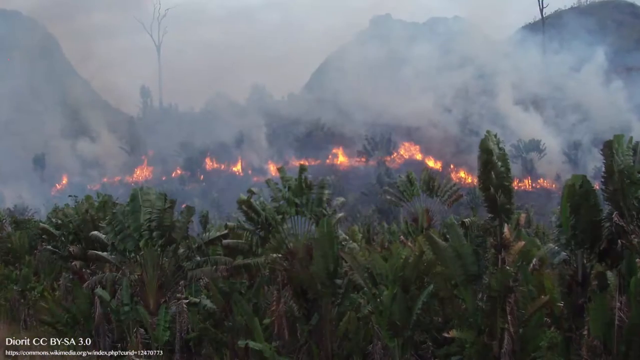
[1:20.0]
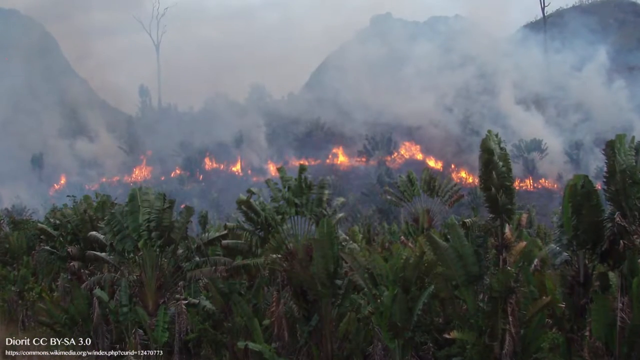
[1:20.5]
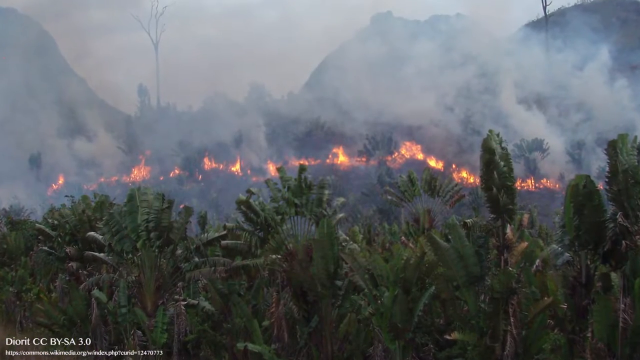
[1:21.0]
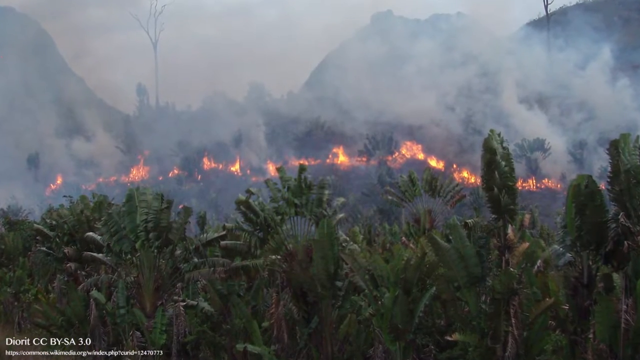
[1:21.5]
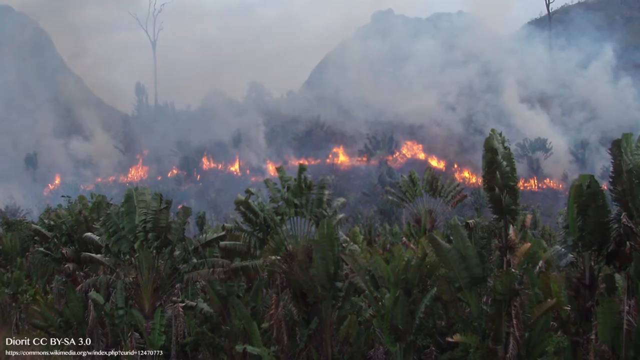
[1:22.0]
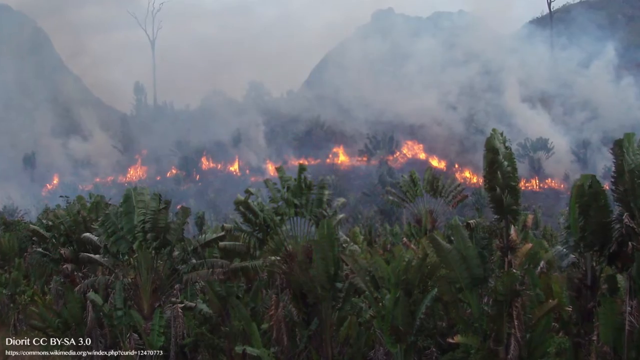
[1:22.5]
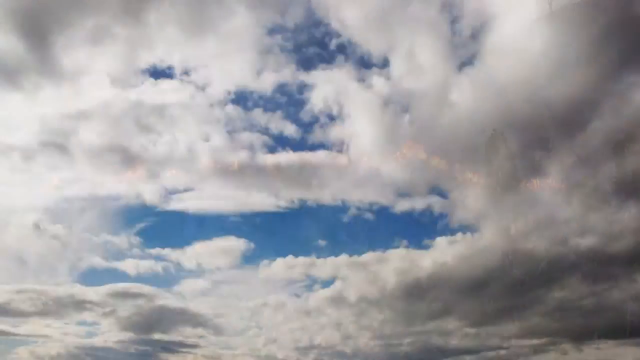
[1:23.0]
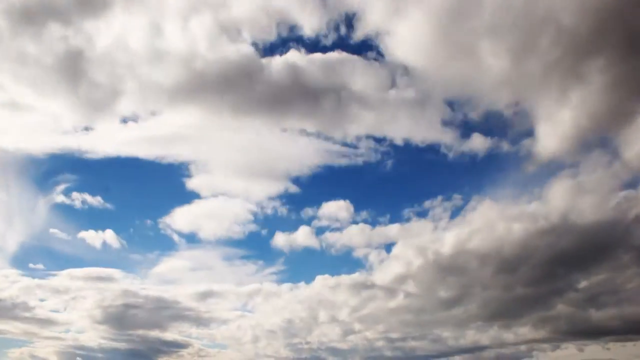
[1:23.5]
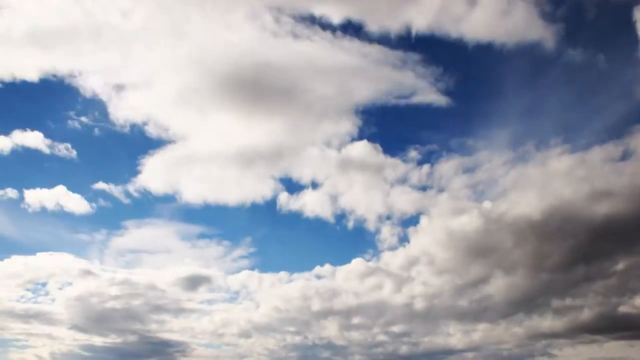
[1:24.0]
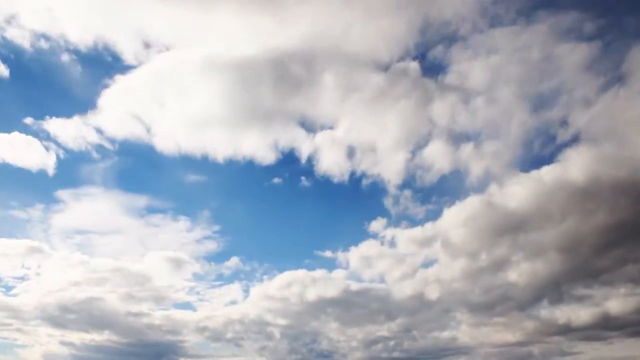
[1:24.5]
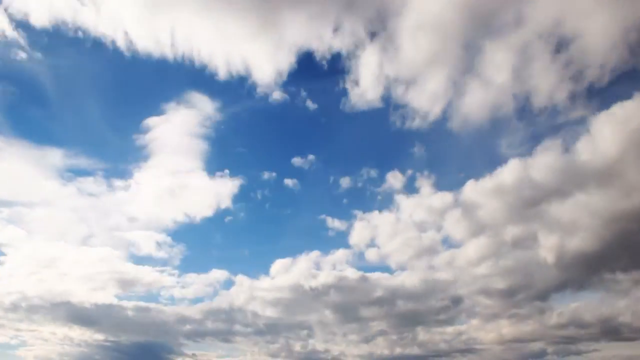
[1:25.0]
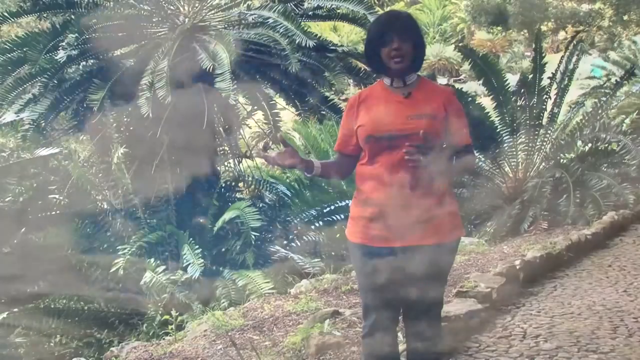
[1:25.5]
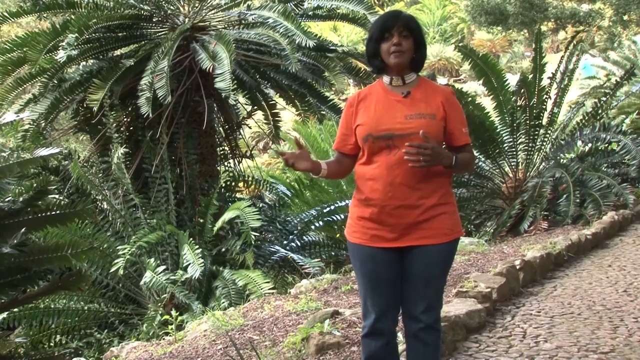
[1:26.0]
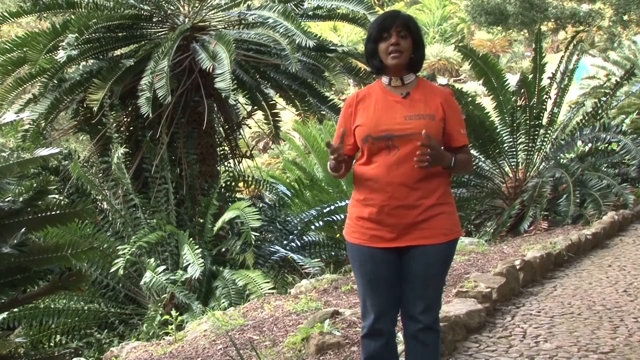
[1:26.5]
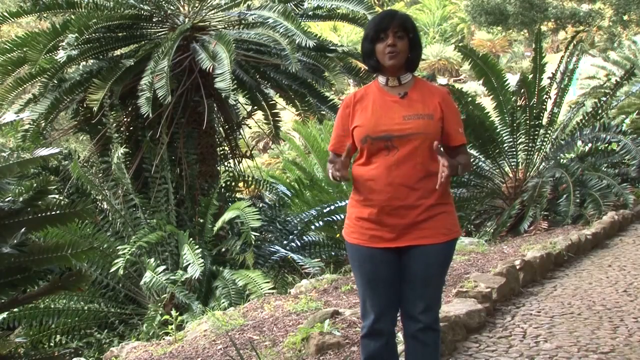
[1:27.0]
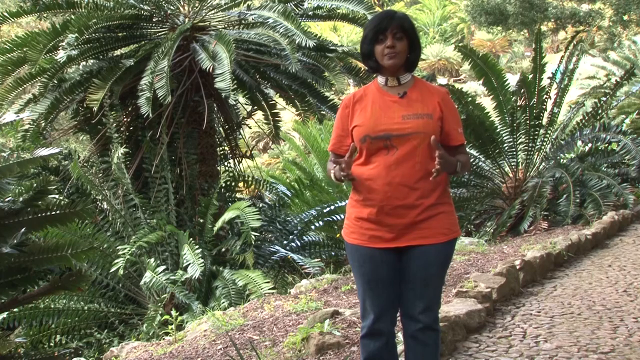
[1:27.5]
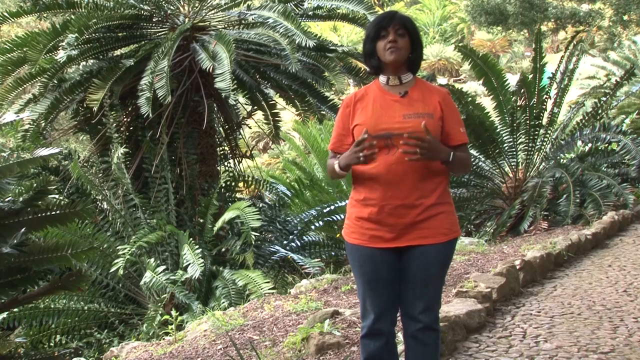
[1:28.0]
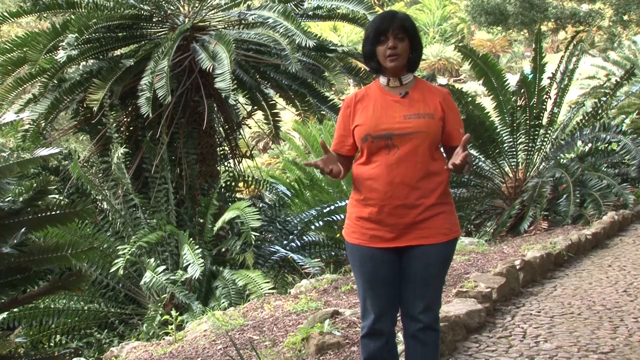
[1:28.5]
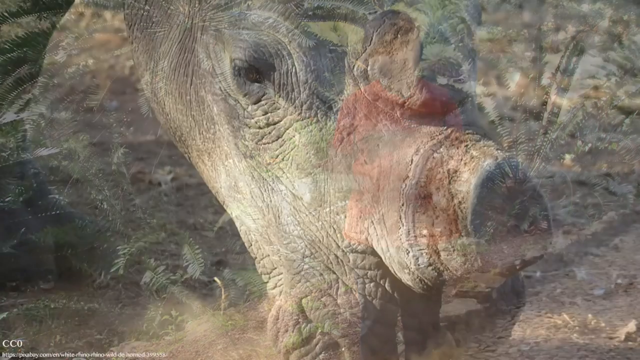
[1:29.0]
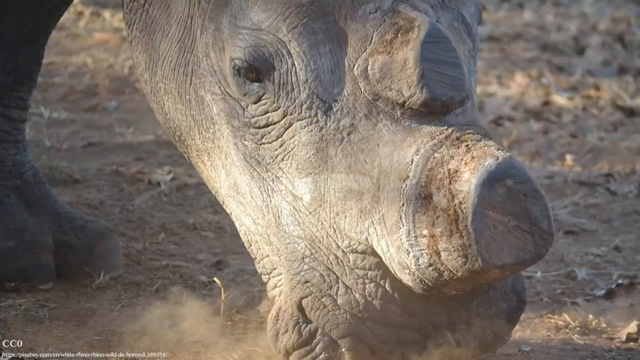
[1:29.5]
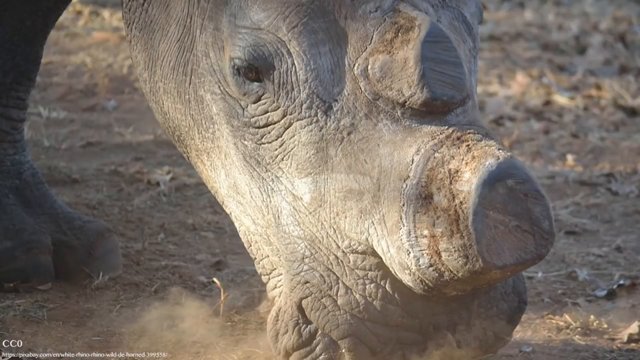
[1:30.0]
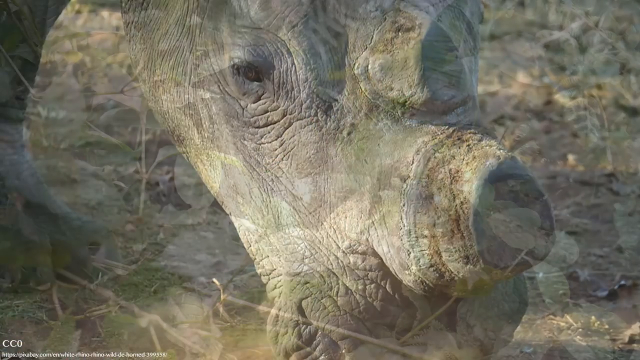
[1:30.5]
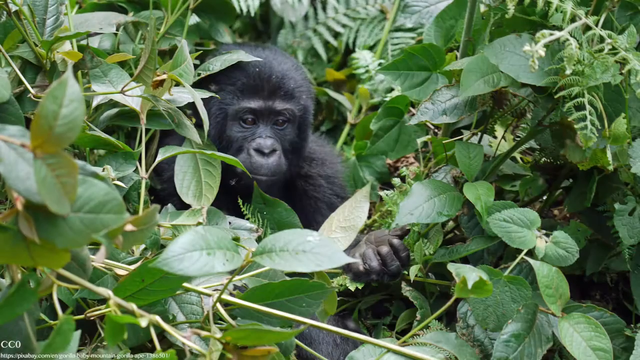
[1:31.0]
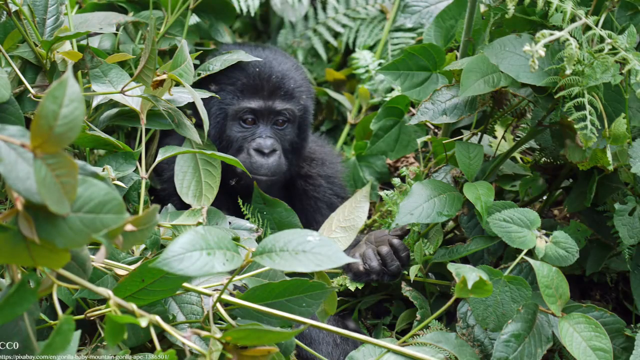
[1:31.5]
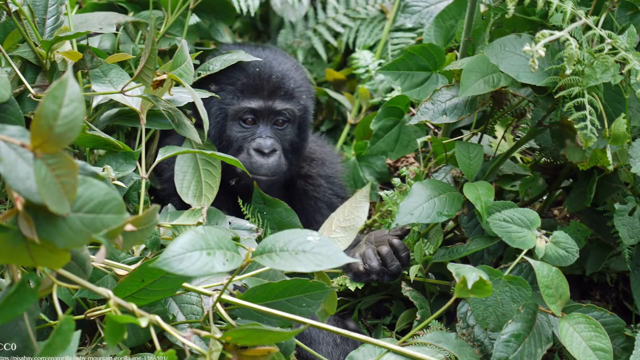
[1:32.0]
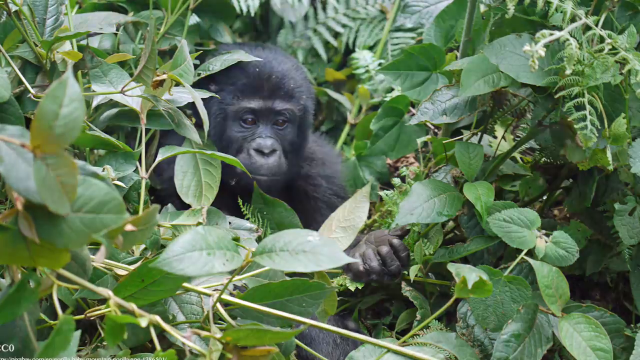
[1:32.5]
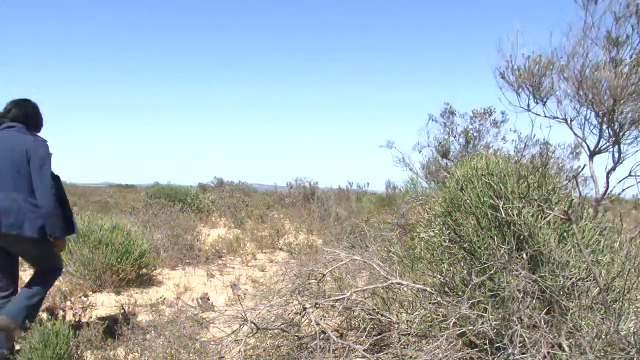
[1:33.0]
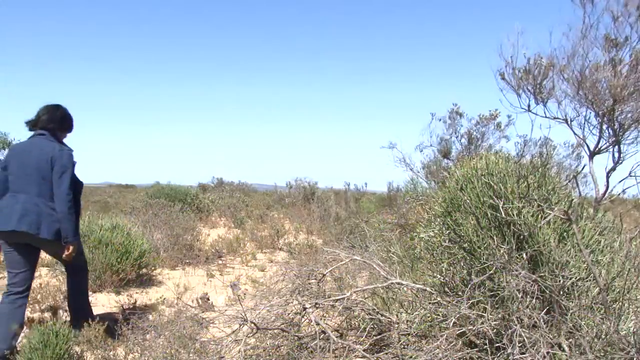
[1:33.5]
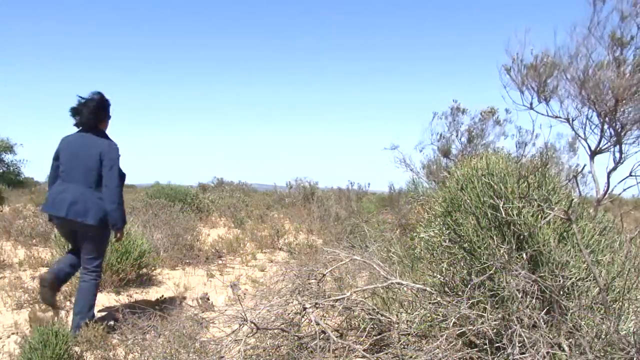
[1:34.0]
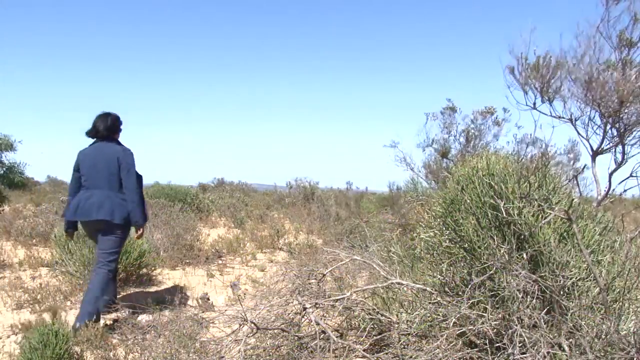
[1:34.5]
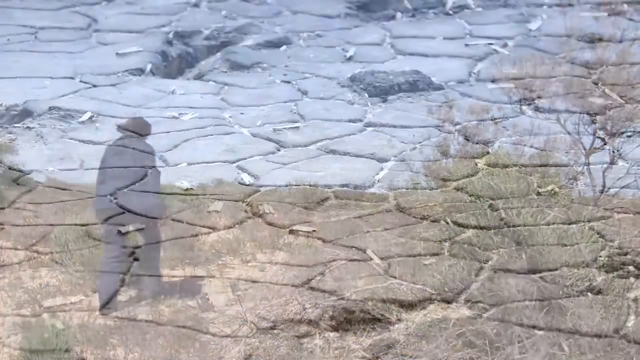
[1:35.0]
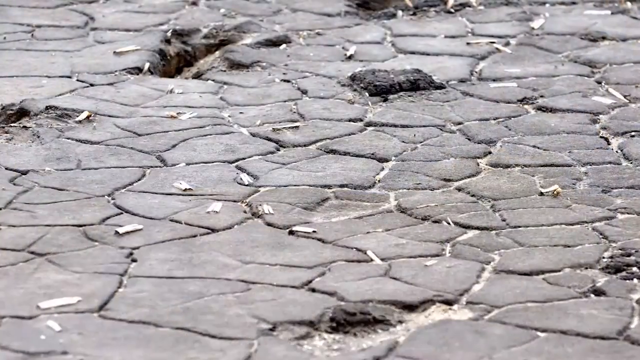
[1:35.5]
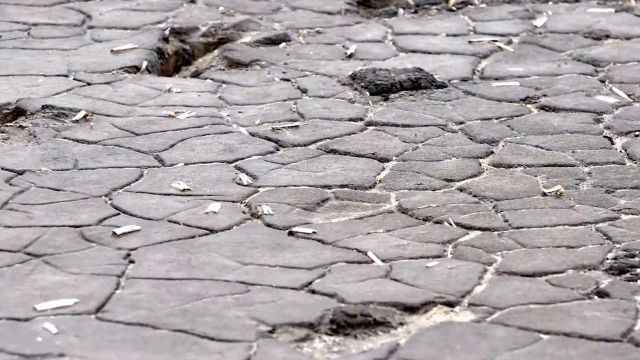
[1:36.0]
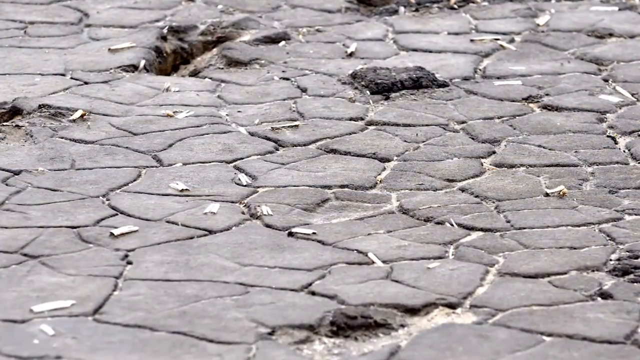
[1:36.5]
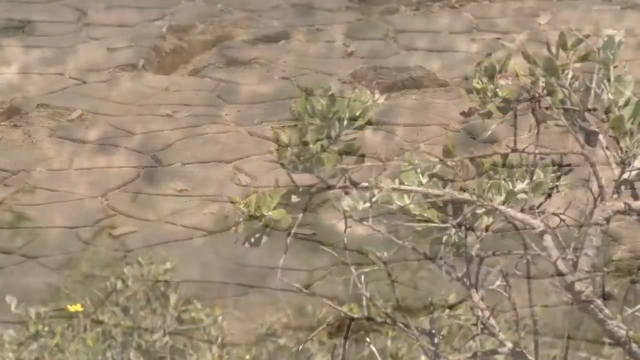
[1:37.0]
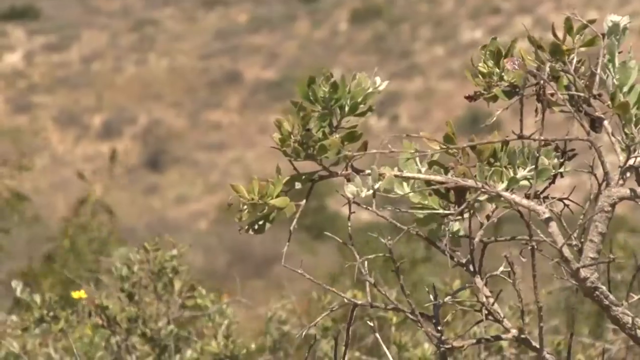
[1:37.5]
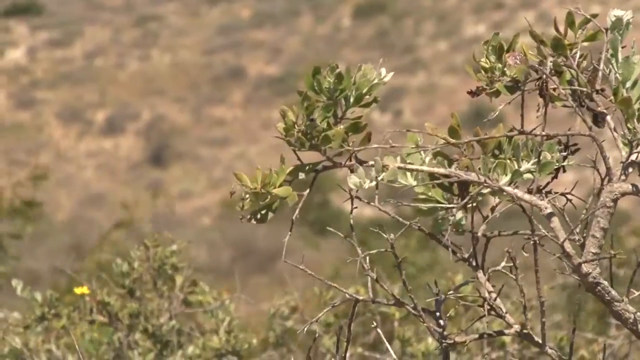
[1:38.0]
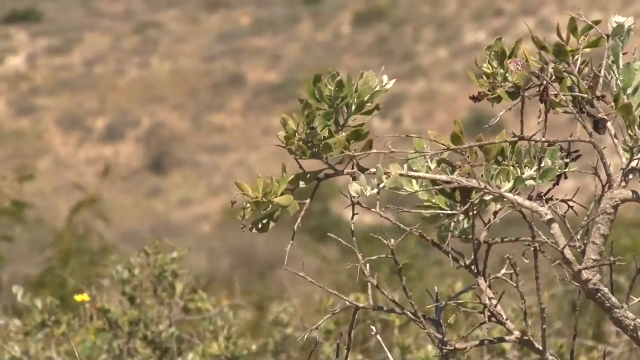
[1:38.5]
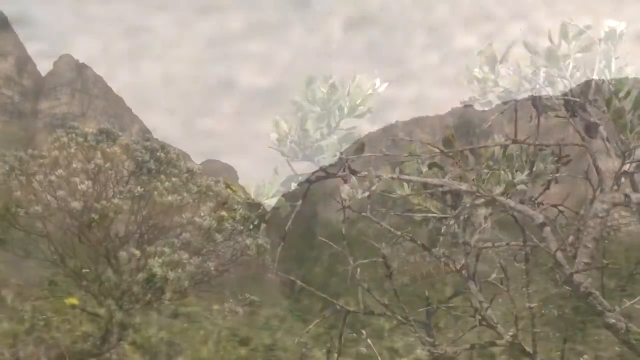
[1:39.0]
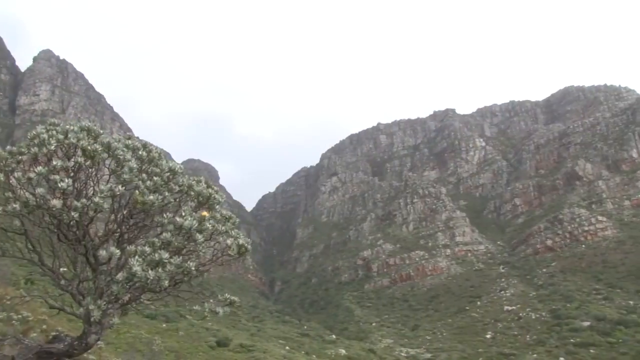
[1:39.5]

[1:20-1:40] Kind of a ring of fires is shown, with smoke filling the area. Green jungle is visible in the foreground, with fronded trees, perhaps bananas or palms, and various fern-like plants about to be engulfed in flame. A slide then shows blue sky with dark and white clouds forming. The face of a rhinoceros is shown, its horns cut off. A black monkey or ape of some sort is shown amid green plants. A woman walks through kind of a wild land that is very dry, with little greenery but some dried plants. The image then shows cracked ground and soil, with no greenery and no moisture, all dry and cracked. A close-up shows a plant moving in the breeze. In the next slide, a tree on the left blooms with white flowers, with dry cliff sides in the distance and to the right, little plant life, and somewhat hazy skies.